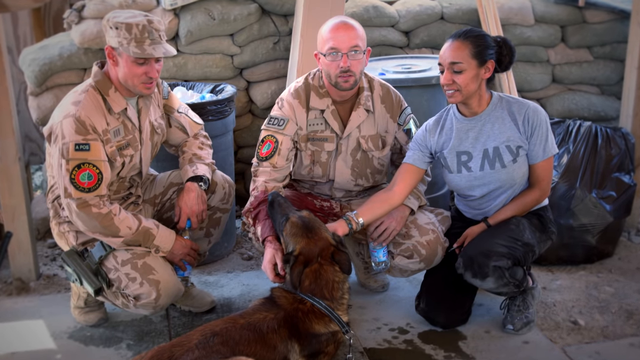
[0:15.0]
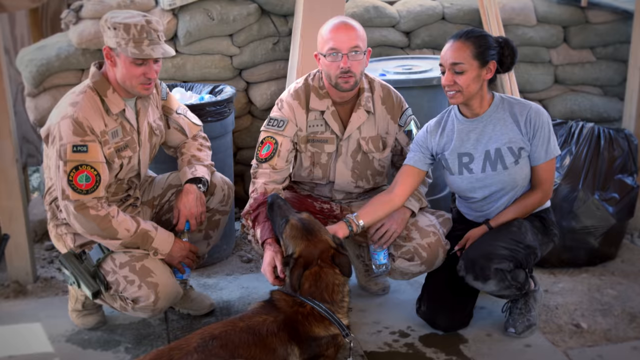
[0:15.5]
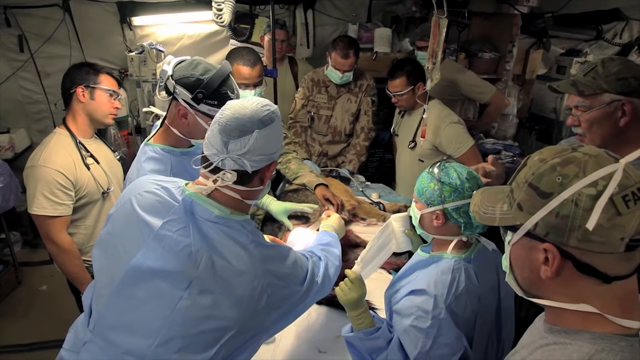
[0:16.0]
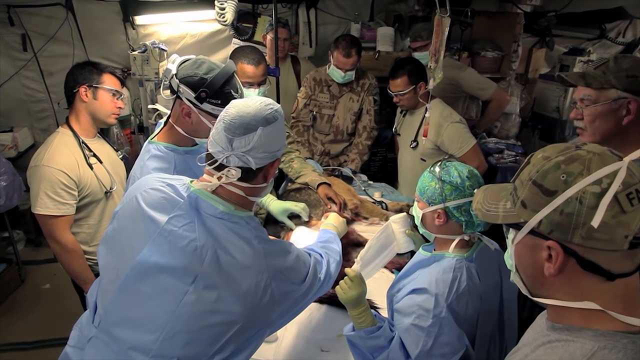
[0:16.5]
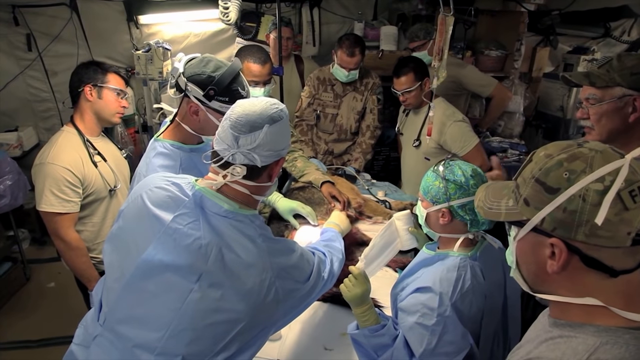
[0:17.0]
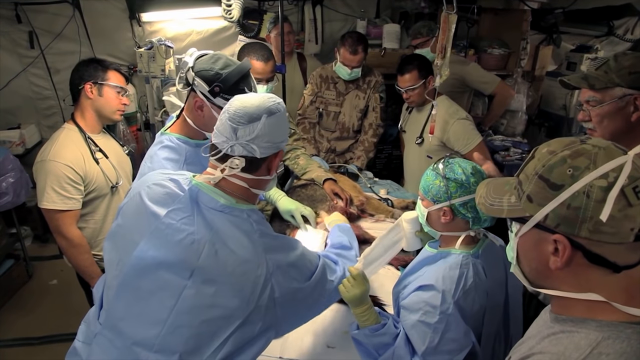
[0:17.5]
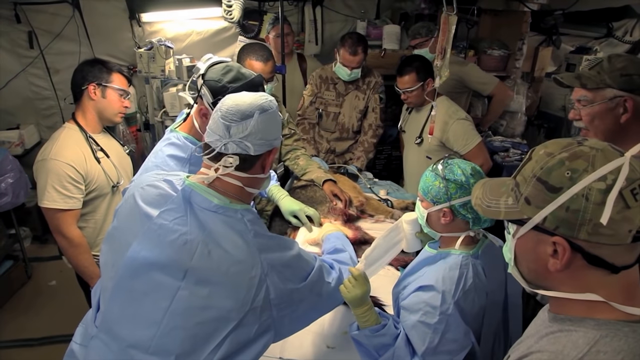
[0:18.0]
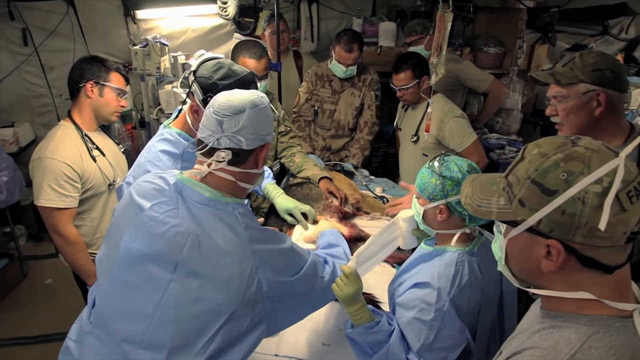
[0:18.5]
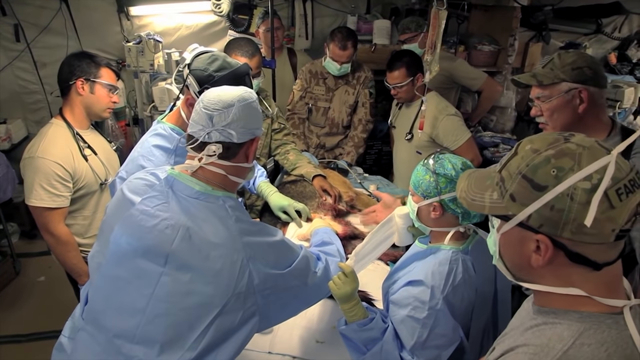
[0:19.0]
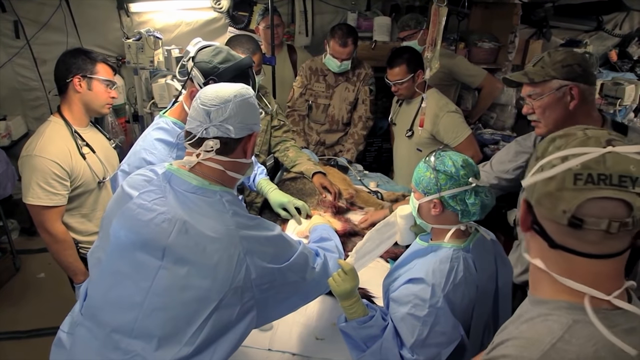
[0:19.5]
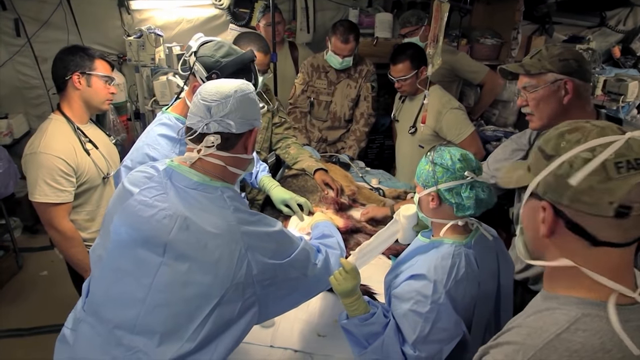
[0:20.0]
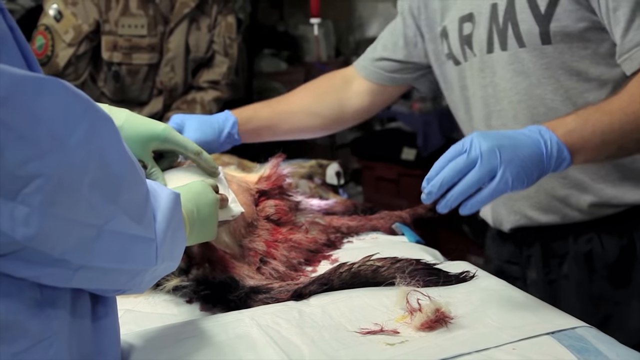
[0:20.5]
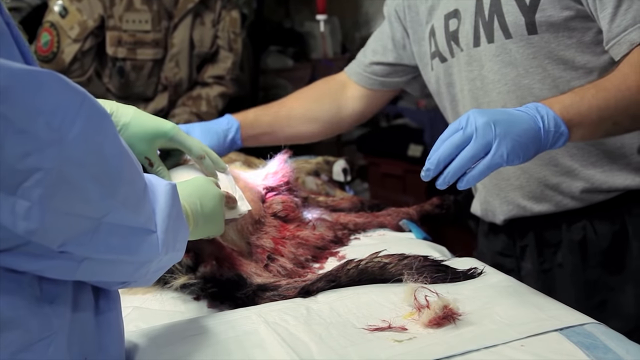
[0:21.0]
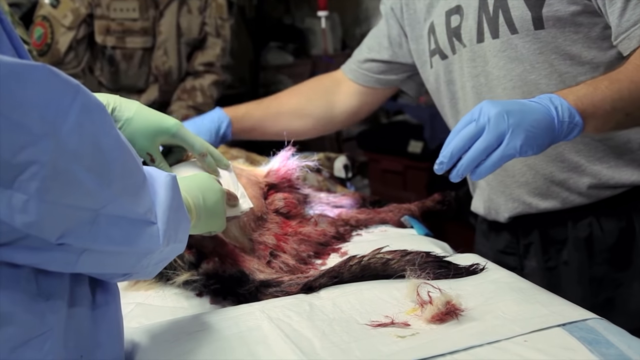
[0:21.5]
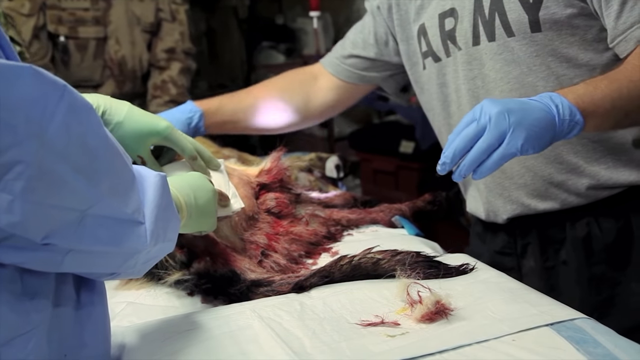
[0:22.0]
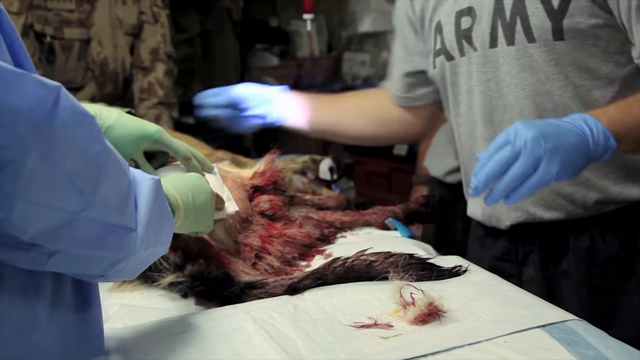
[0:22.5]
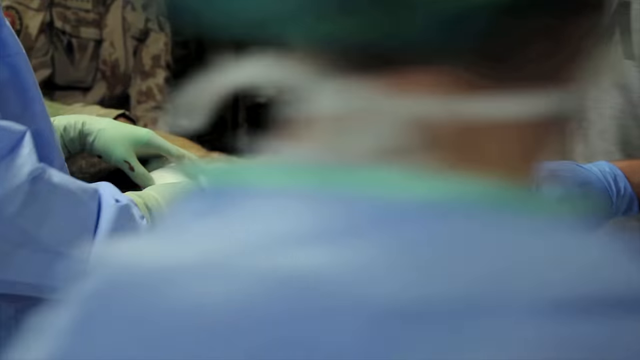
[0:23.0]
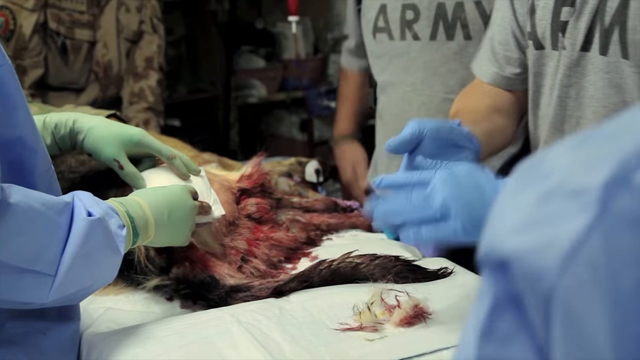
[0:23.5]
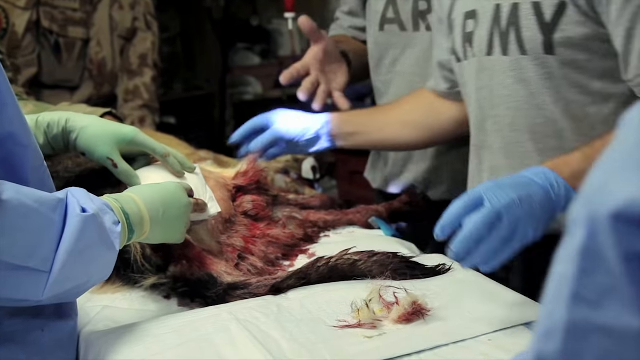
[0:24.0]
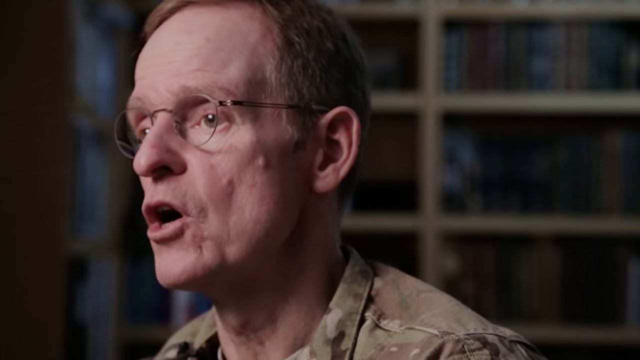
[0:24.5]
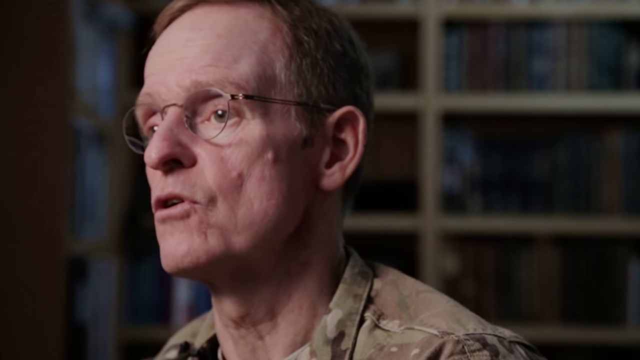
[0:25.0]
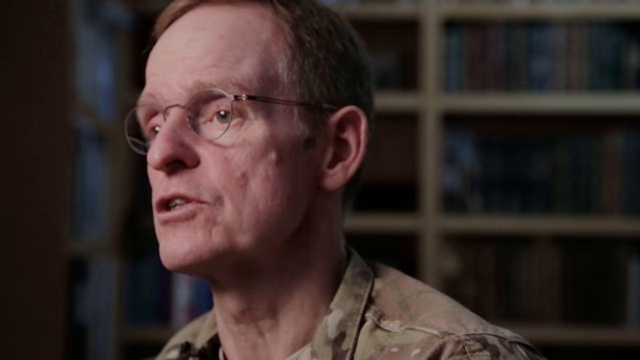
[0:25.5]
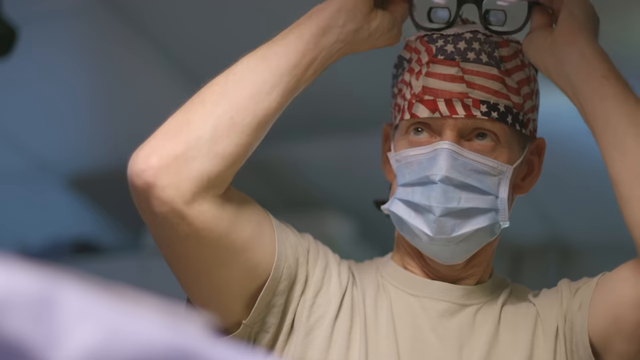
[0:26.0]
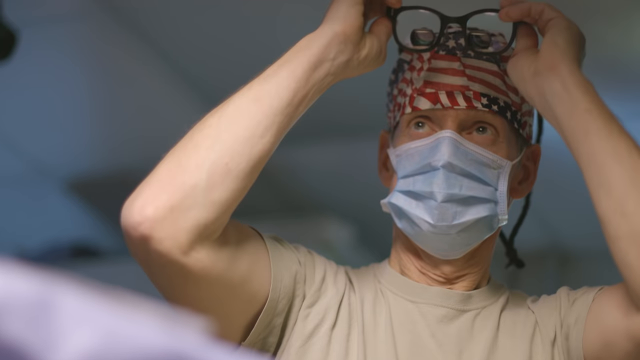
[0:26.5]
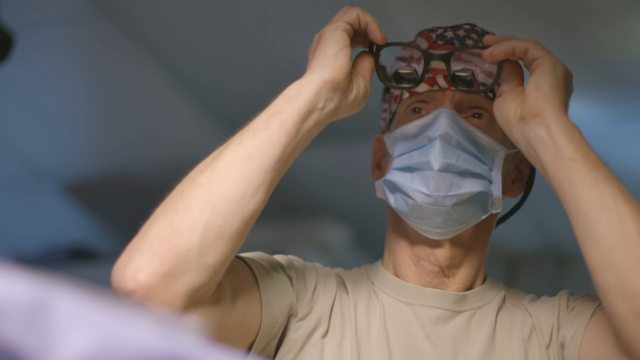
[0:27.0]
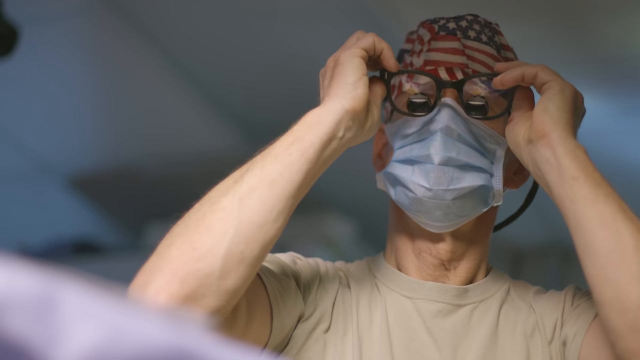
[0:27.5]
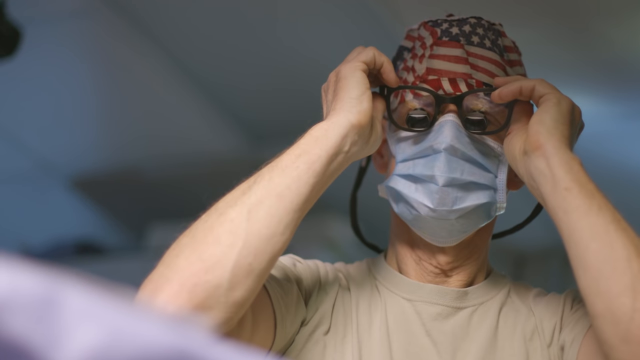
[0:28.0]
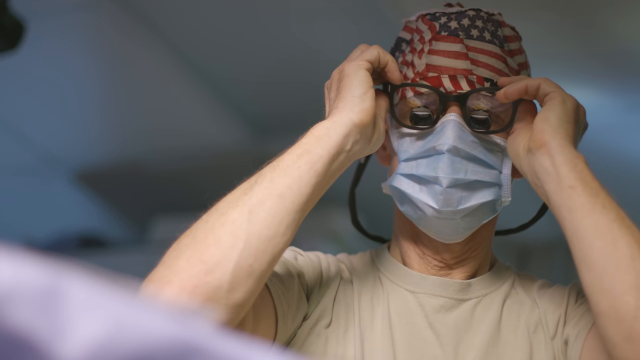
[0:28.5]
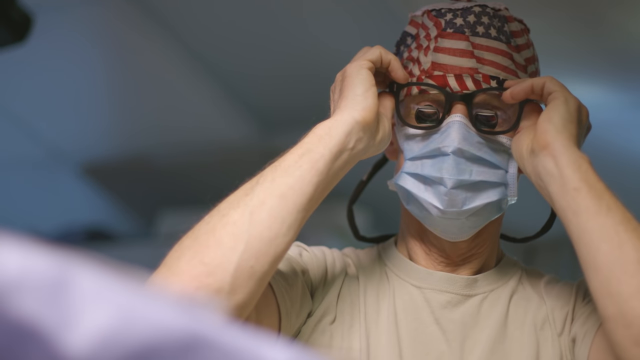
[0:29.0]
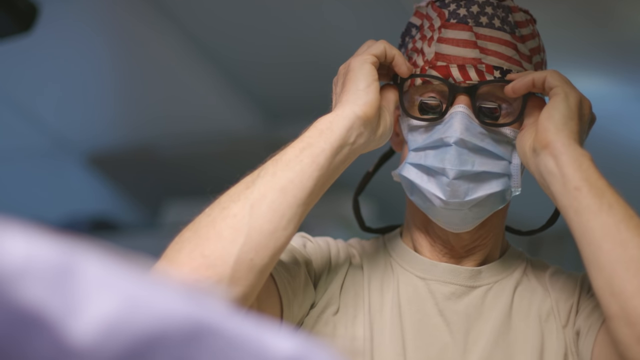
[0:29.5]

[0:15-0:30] Three people, two in military uniforms and the third in an army t-shirt, are crouched around the German Shepherd, petting him. The video cuts to a field surgery that looks to be in a tent, with the German Shepherd in the middle undergoing surgery, surrounded by ten people operating on the dog. A close-up shows one surgeon putting on special glasses, followed by a view of the dog on the table, covered in blood.